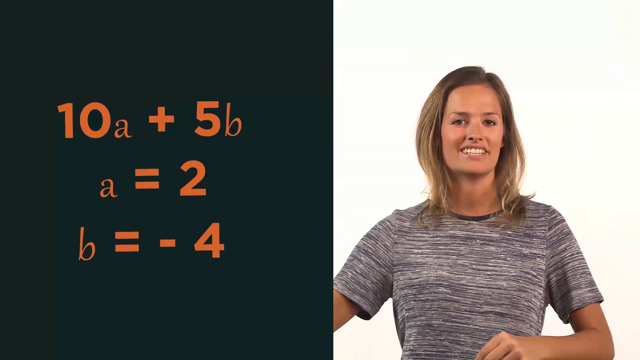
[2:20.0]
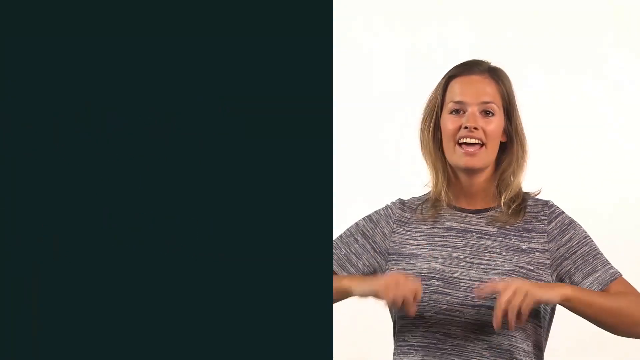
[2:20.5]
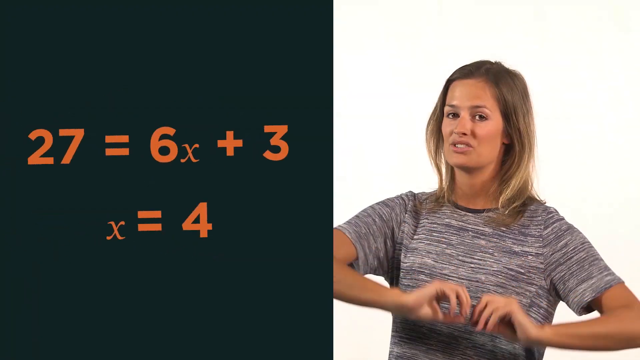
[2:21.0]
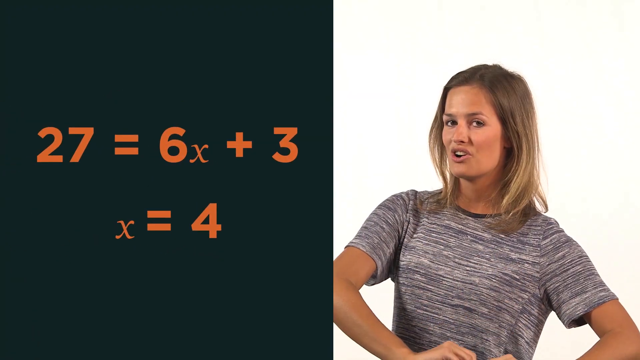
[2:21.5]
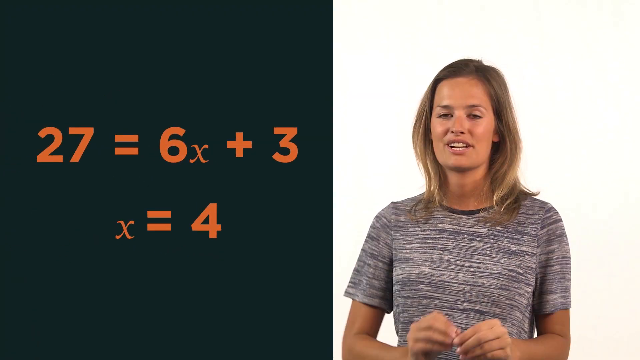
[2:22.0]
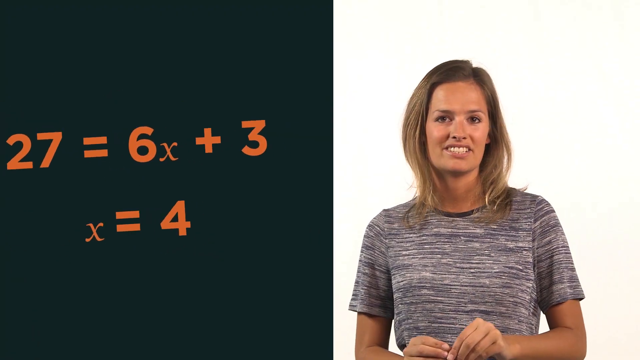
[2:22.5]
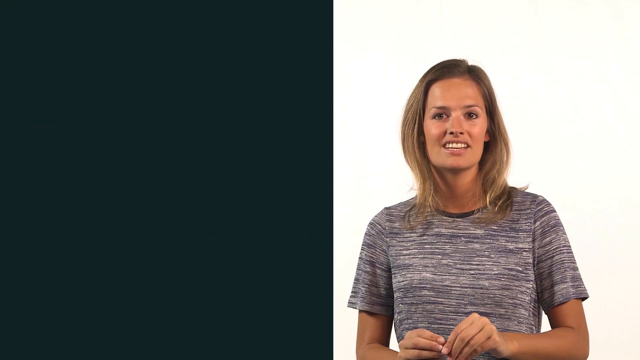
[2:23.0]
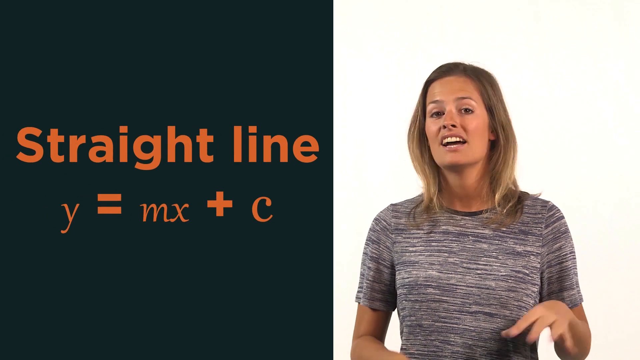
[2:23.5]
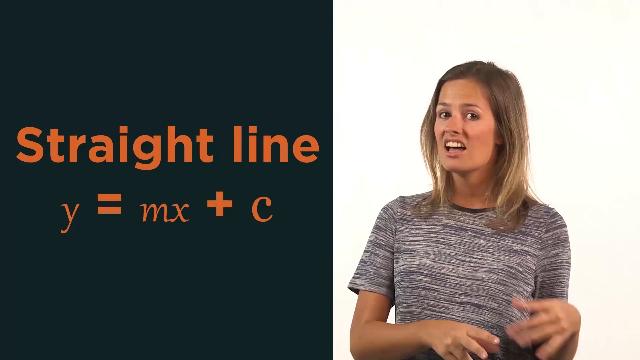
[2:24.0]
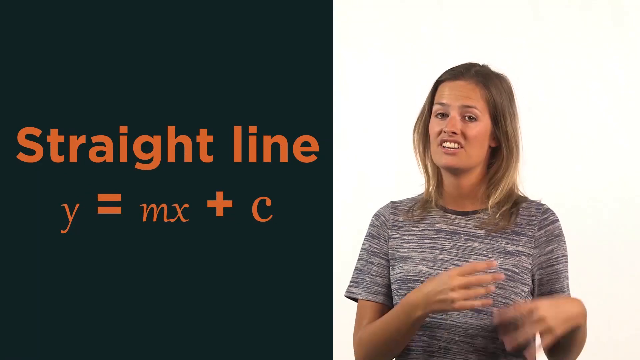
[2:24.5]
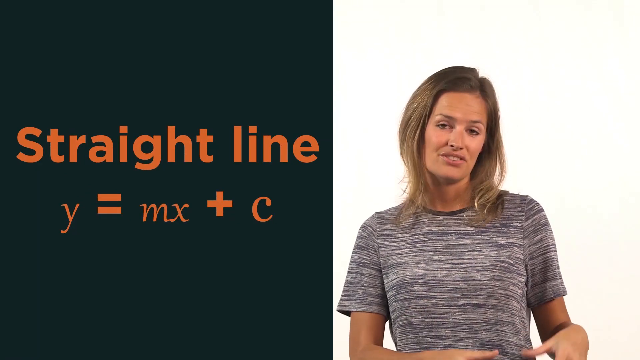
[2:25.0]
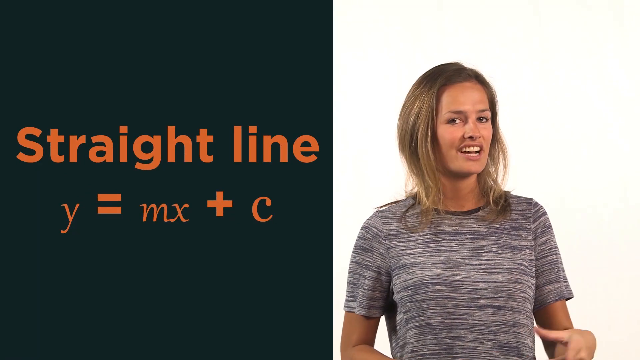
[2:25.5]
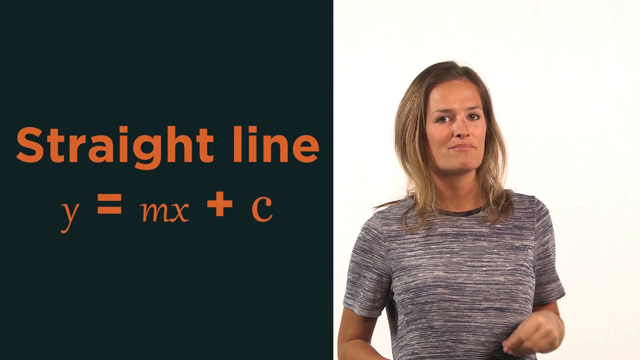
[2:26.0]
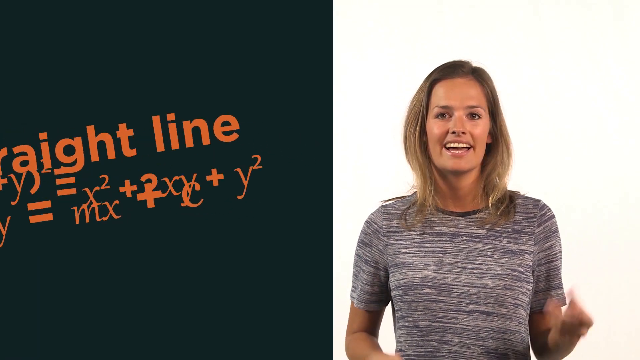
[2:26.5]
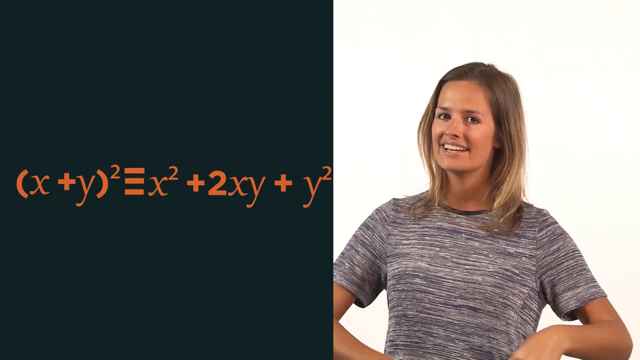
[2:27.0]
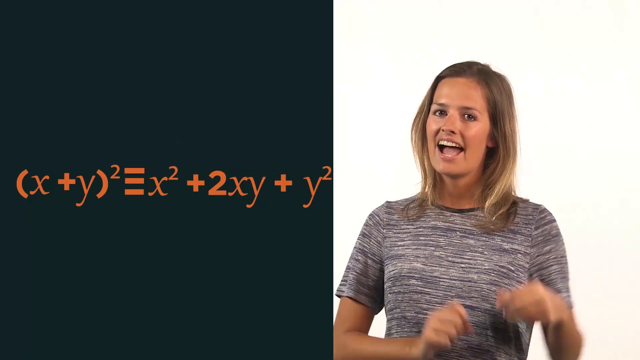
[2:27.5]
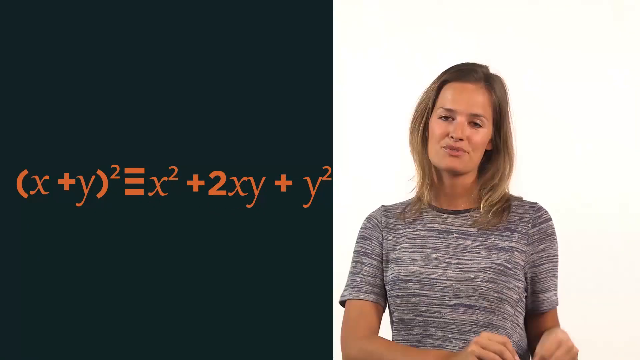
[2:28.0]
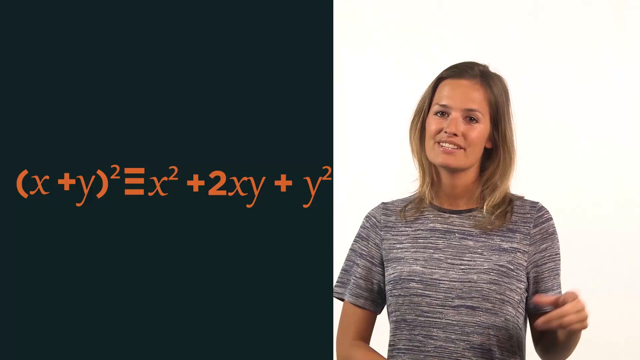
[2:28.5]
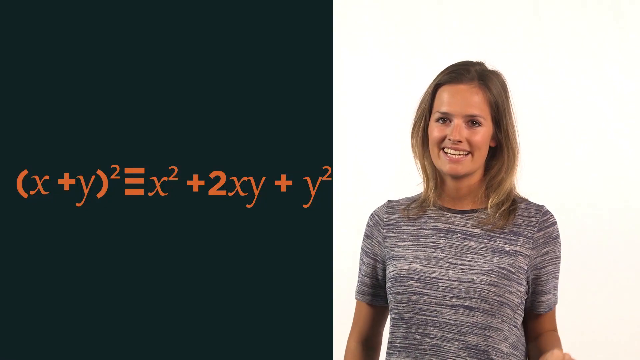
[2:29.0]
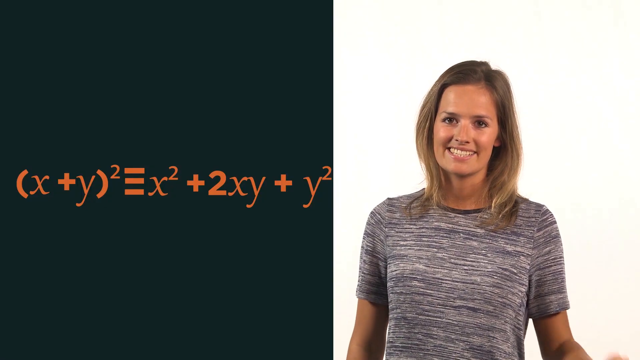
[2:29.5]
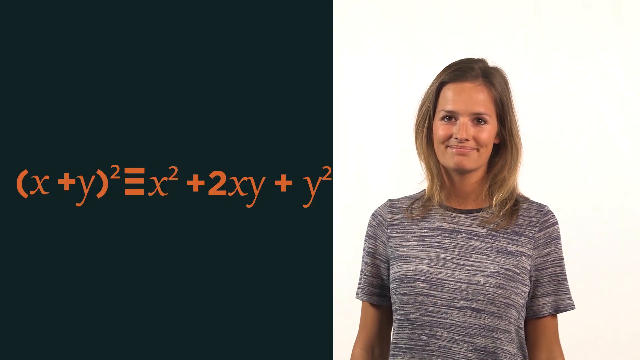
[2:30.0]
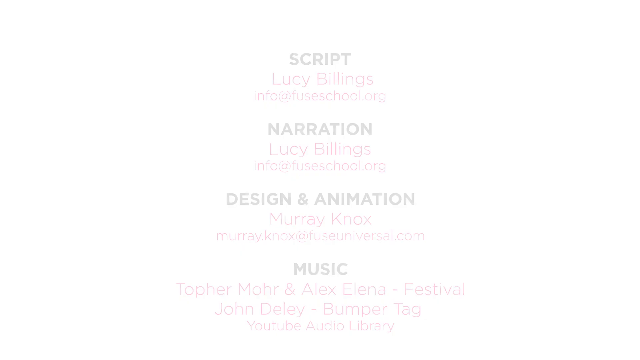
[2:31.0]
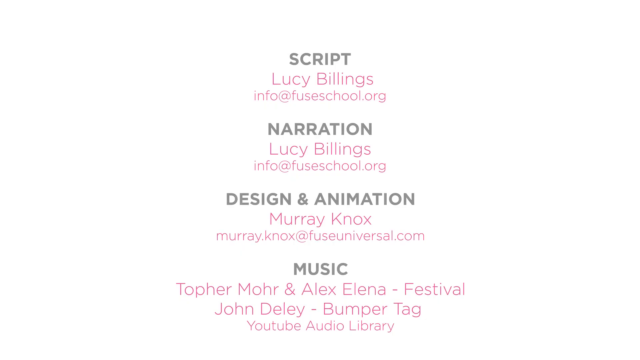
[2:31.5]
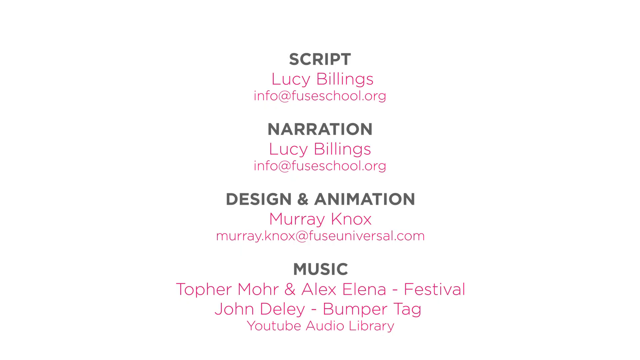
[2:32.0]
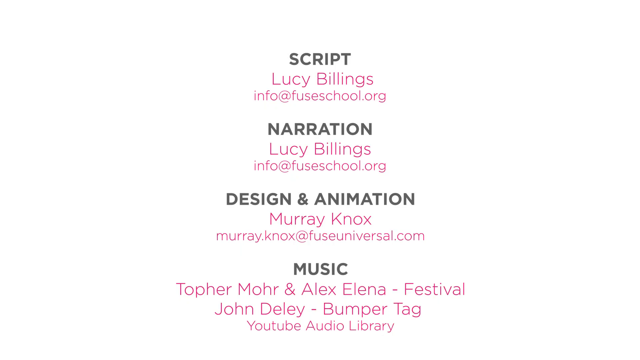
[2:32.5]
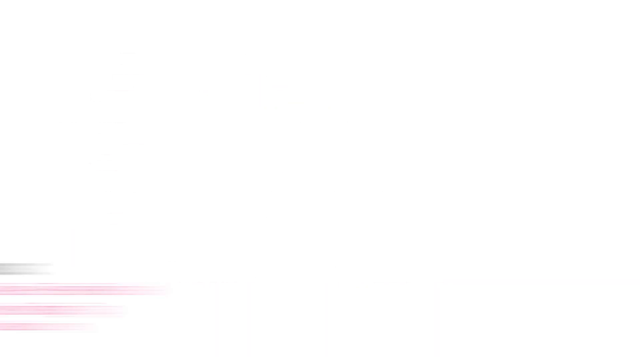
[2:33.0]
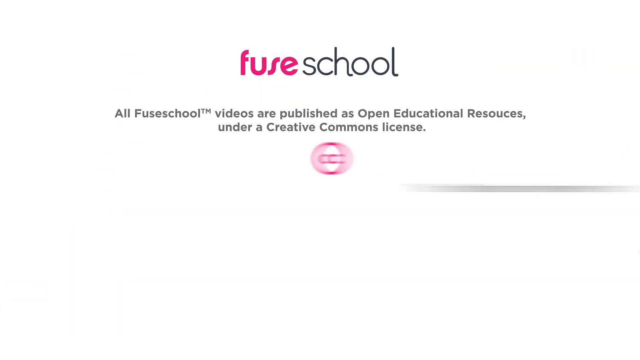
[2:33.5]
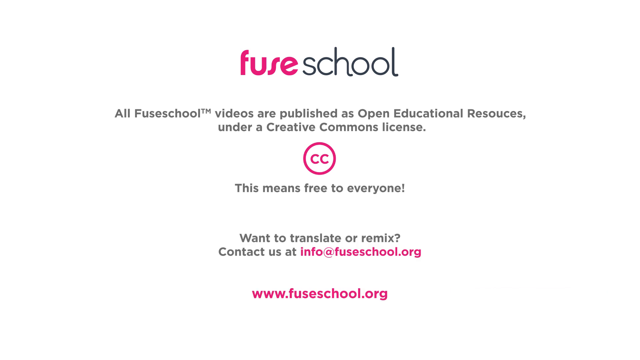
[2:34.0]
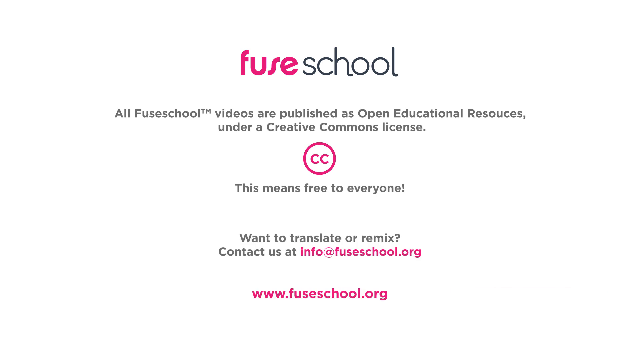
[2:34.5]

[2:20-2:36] Half the screen is a black background and the other half shows a young white girl speaking. "Straight line" is shown, and different equations slide in as she speaks. A white screen then shows credits, with the first word starting with "script" and "Fuse" written in pink. Next comes a Fuse School logo with some other information on the page.